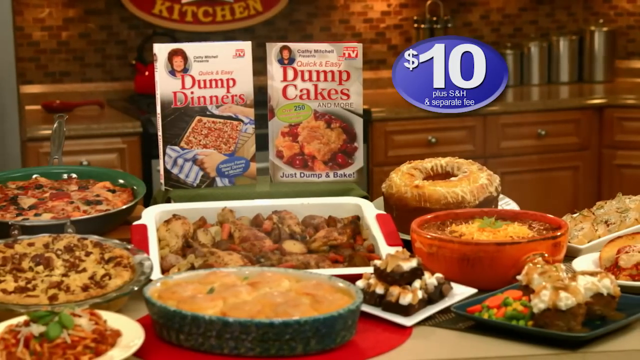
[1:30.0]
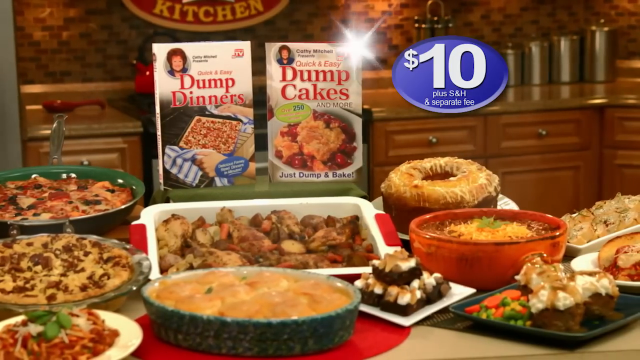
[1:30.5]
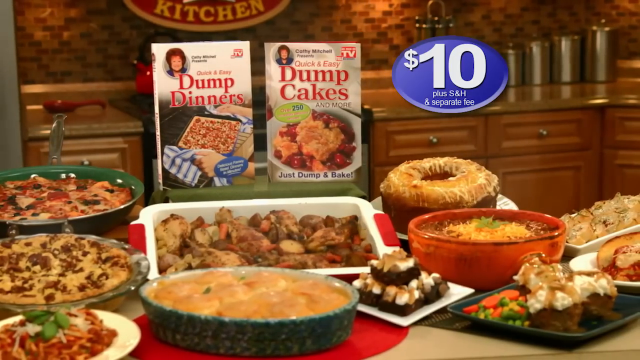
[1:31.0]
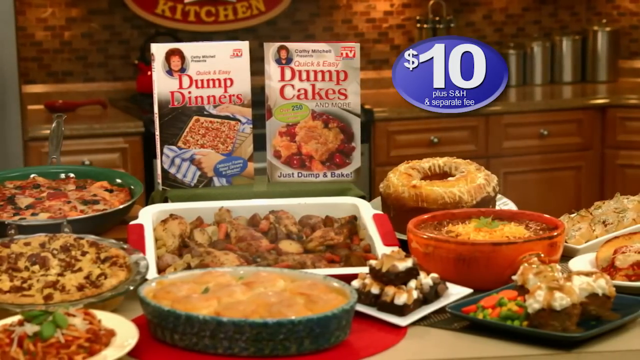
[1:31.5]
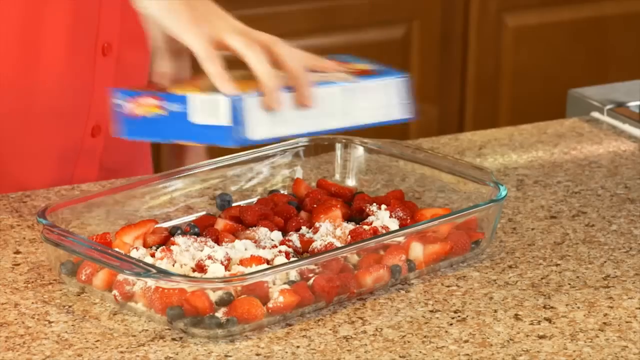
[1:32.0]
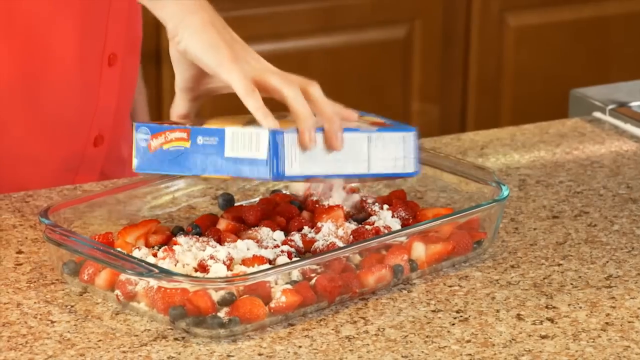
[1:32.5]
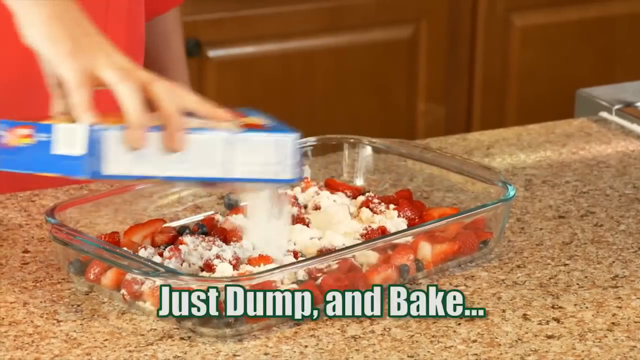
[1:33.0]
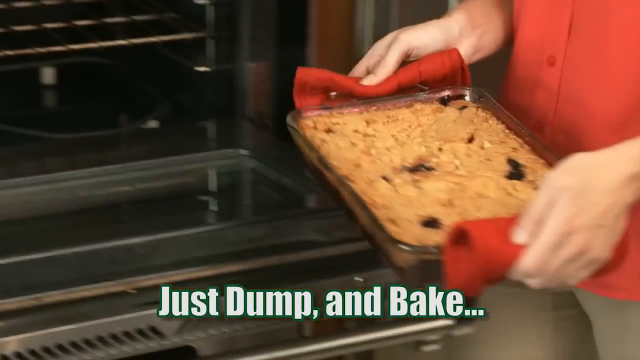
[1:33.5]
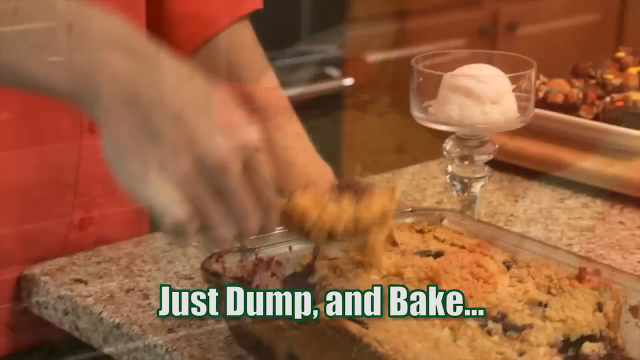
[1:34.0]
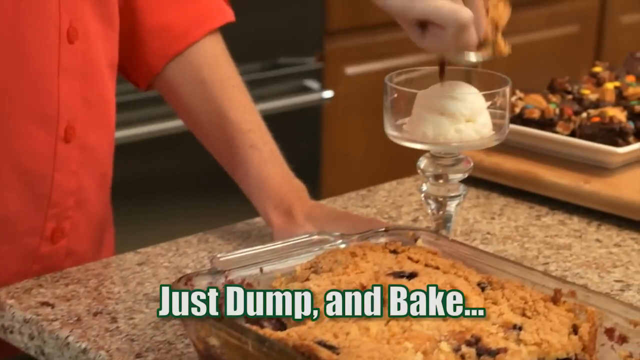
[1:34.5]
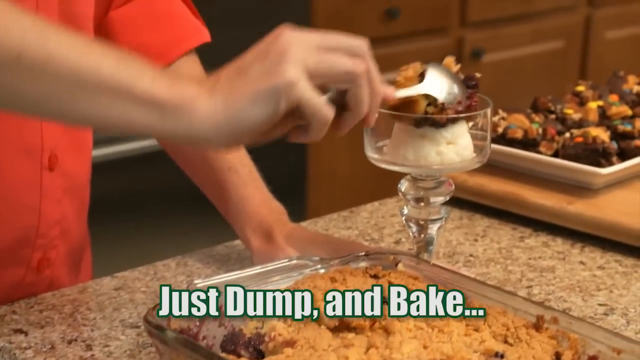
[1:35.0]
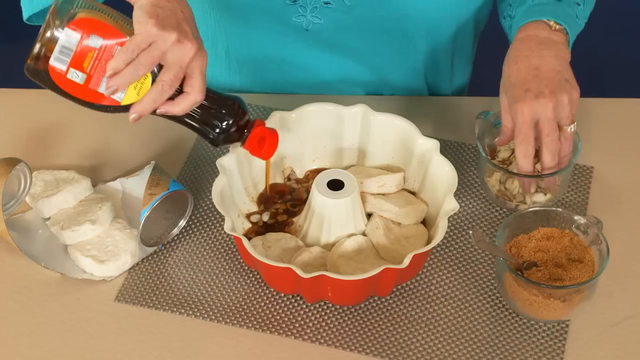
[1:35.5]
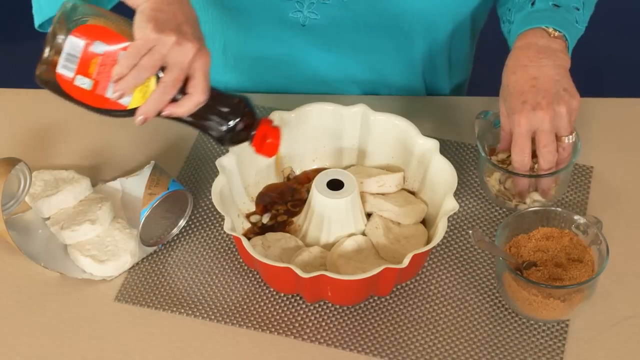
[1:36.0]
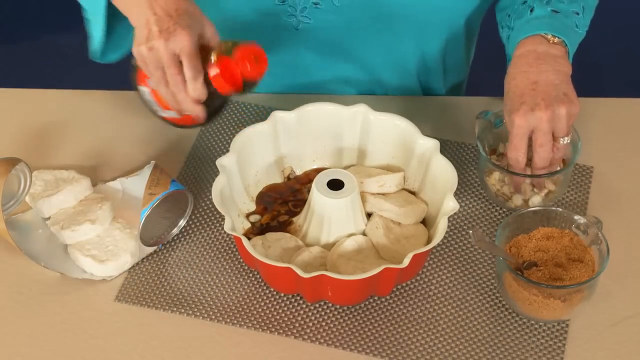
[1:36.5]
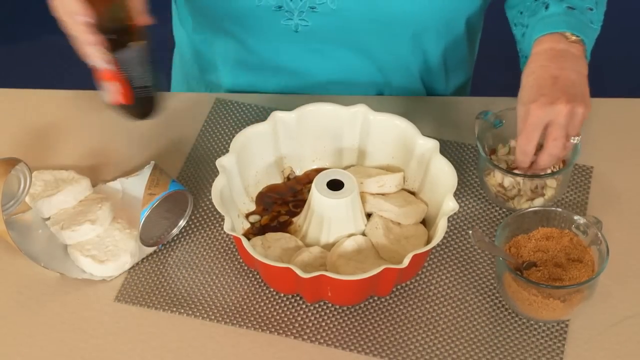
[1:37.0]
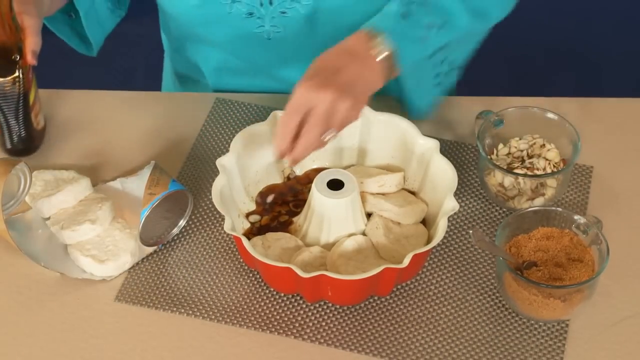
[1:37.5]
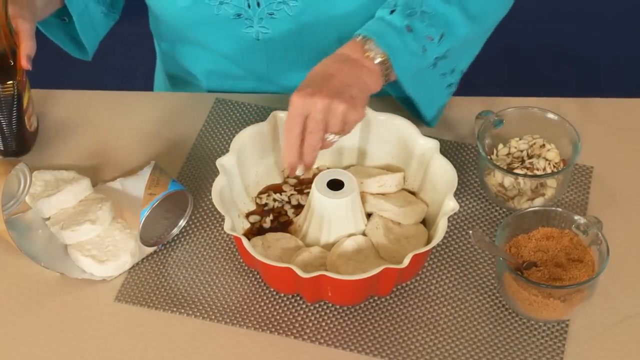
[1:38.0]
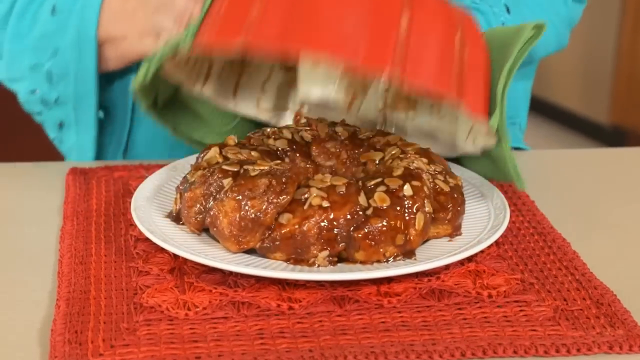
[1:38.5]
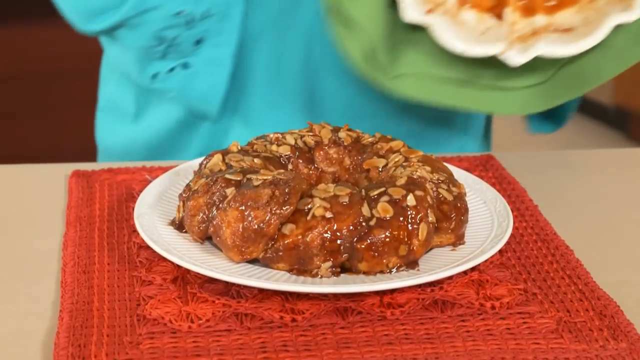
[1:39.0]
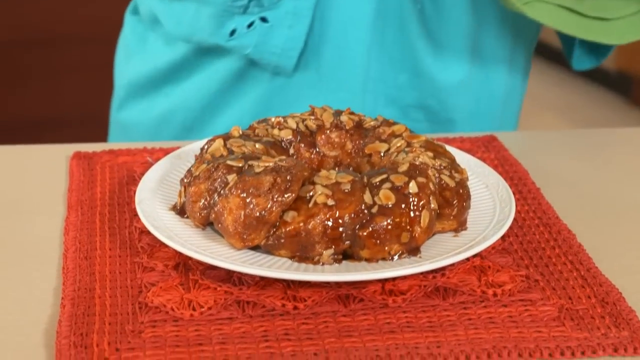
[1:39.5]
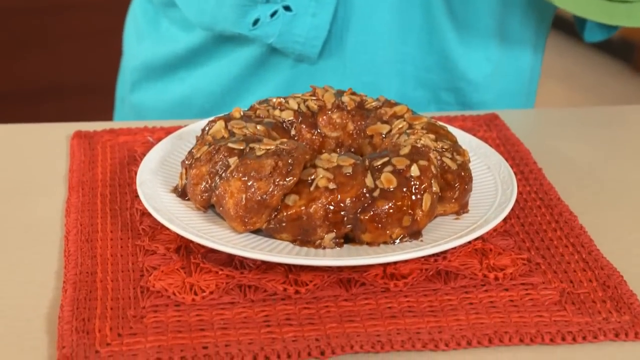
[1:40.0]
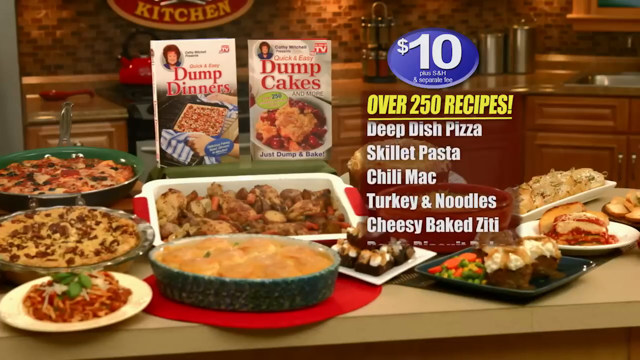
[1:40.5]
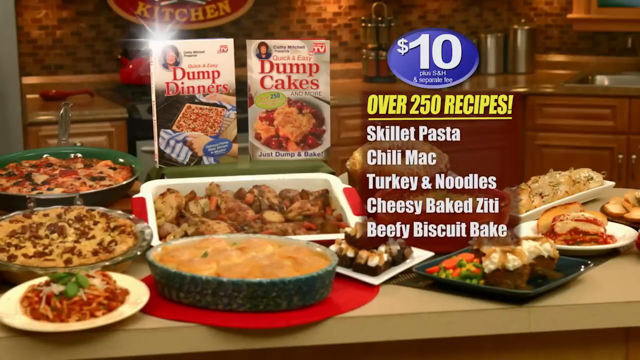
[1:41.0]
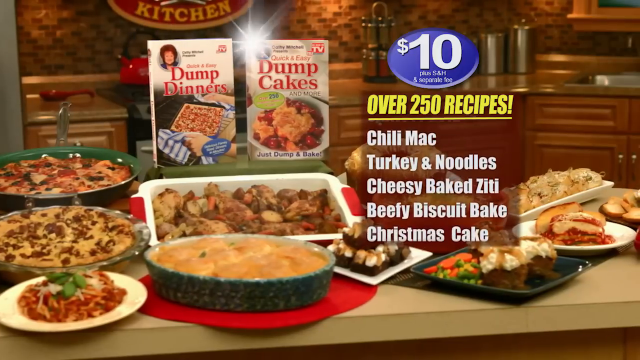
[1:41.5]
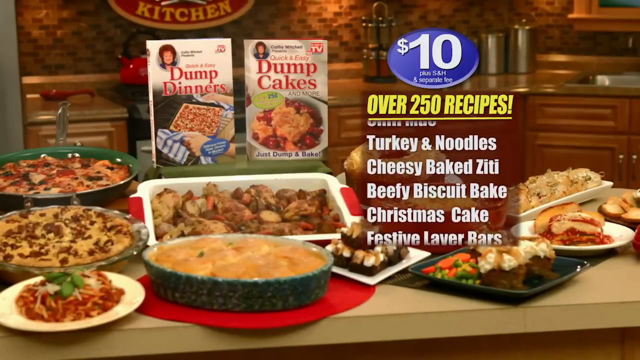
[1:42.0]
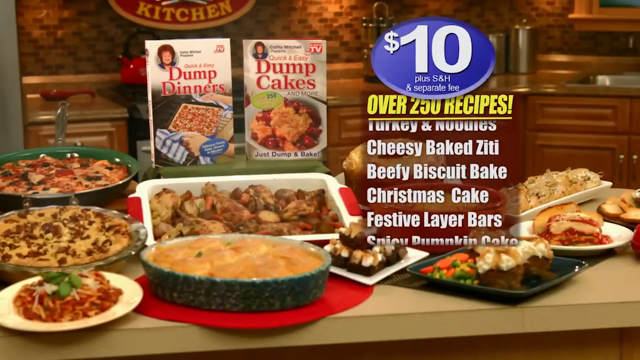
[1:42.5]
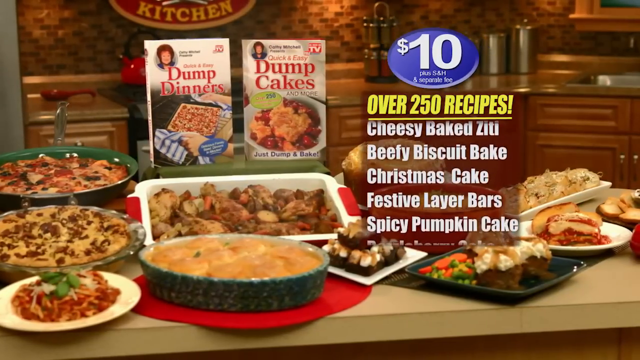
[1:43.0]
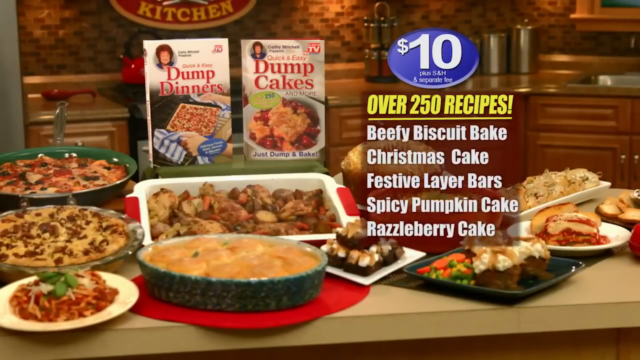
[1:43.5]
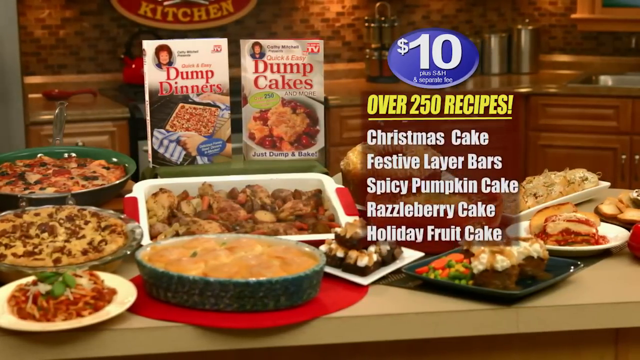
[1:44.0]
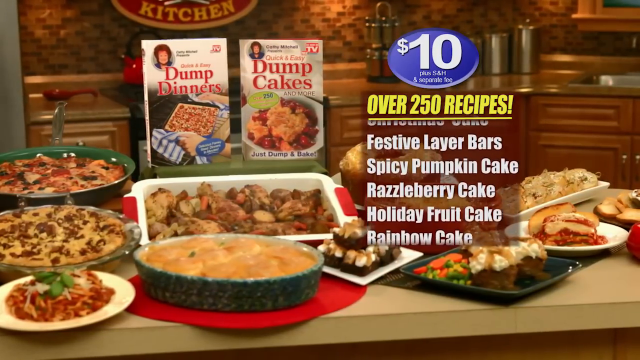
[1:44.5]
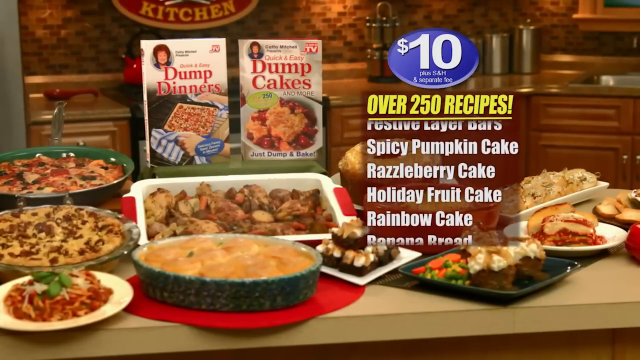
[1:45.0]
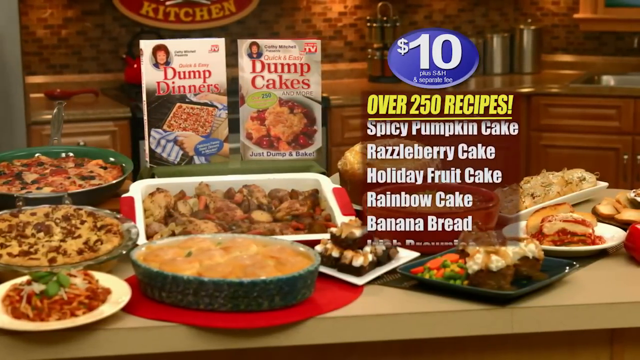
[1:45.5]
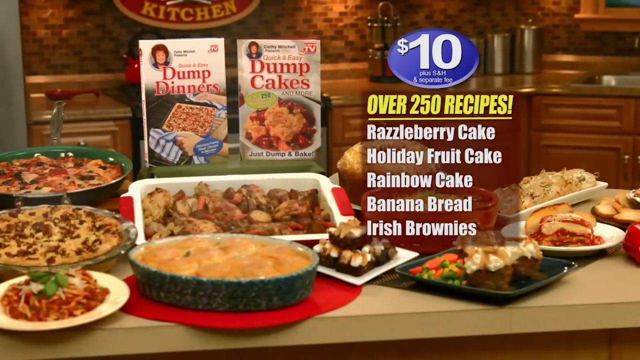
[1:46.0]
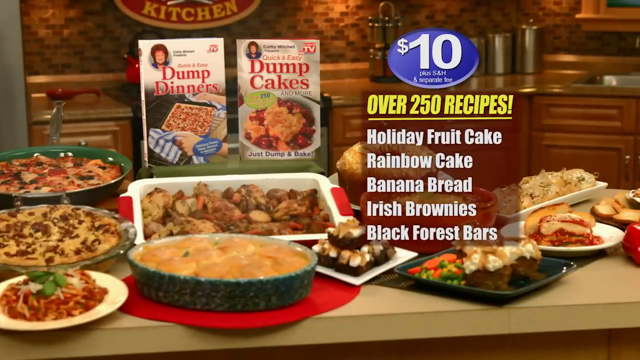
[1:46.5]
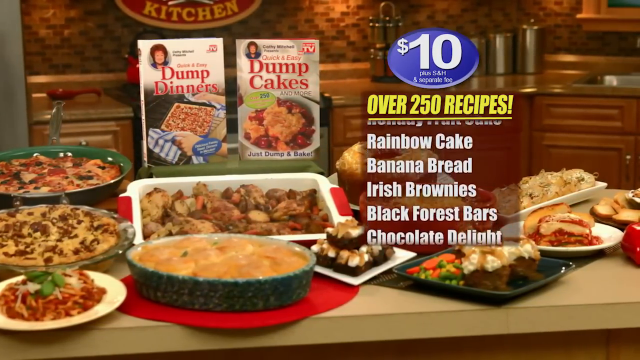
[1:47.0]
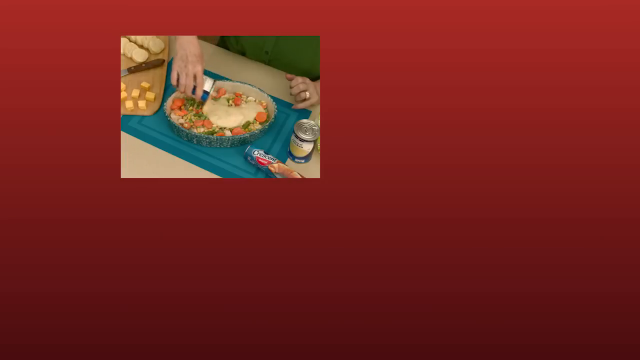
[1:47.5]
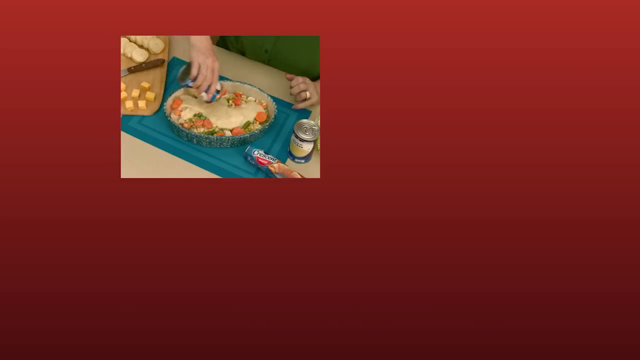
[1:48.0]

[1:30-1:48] A montage shows the different dishes she has already made plus a couple of new ones, including desserts she bakes, such as banana pudding and some type of cake, a chocolate cake. The video goes back to the recipe book and shows the different things in it. Text says you get over 250, and the recipes include rainbow cake, banana bread, Irish brownies, black forest bars and chocolate delights. The price shown is $10.